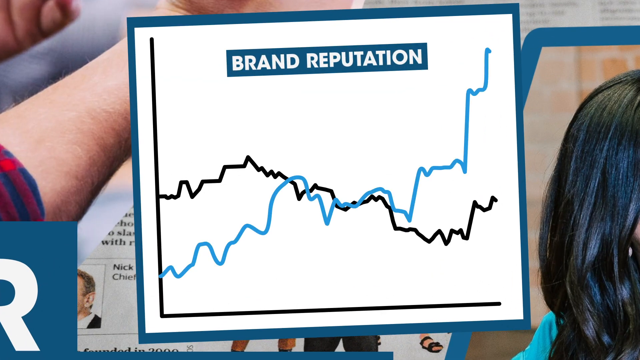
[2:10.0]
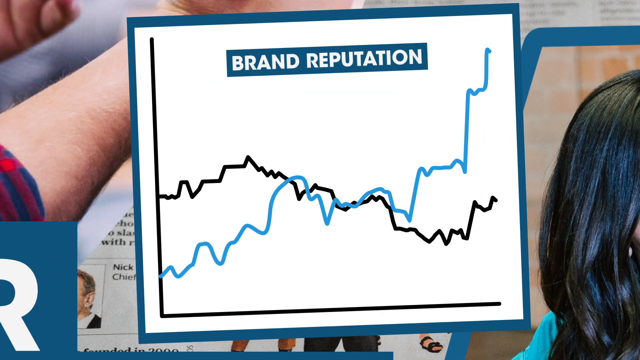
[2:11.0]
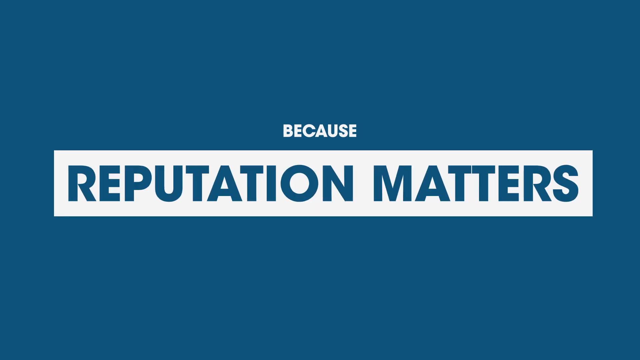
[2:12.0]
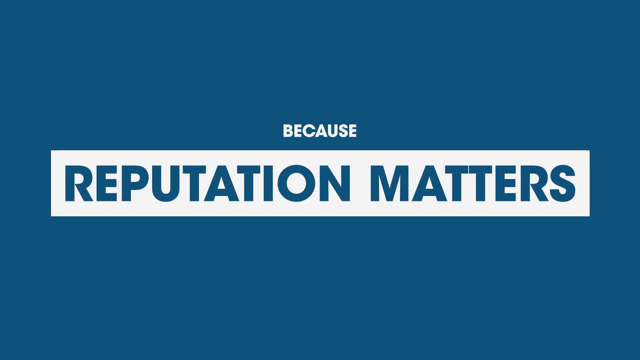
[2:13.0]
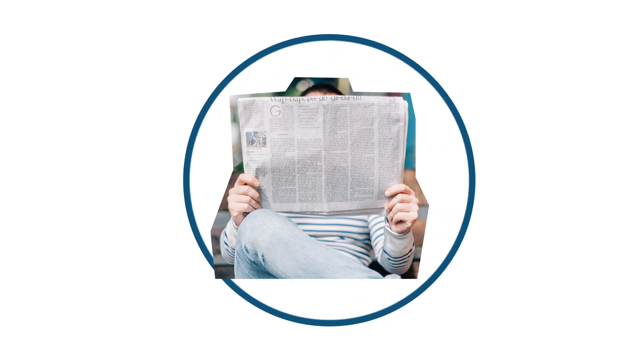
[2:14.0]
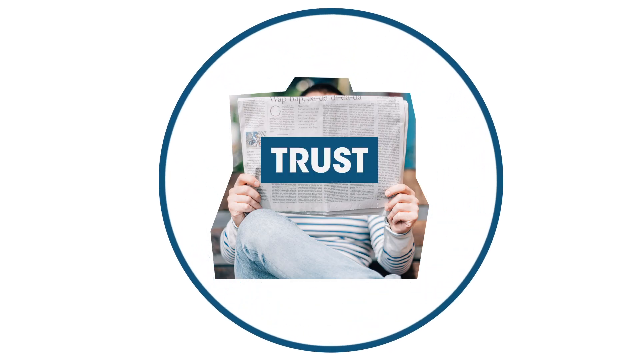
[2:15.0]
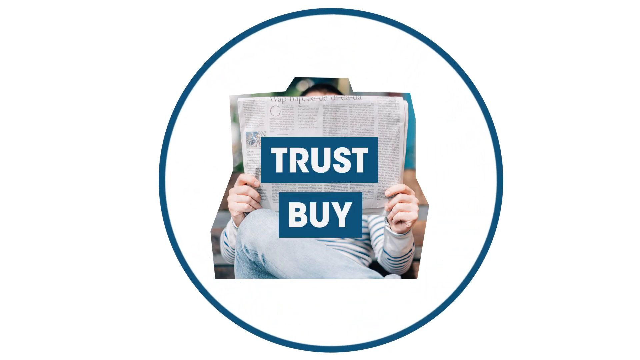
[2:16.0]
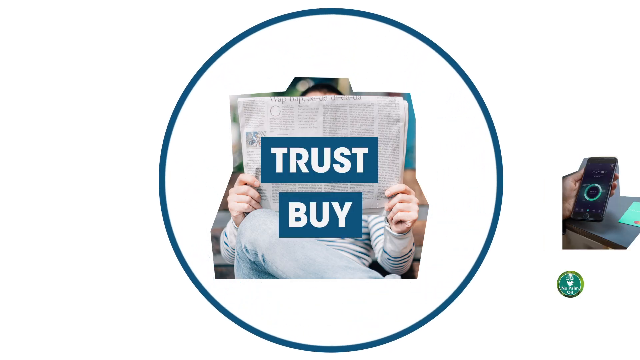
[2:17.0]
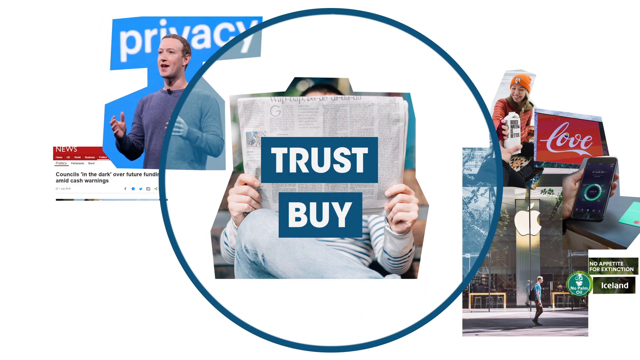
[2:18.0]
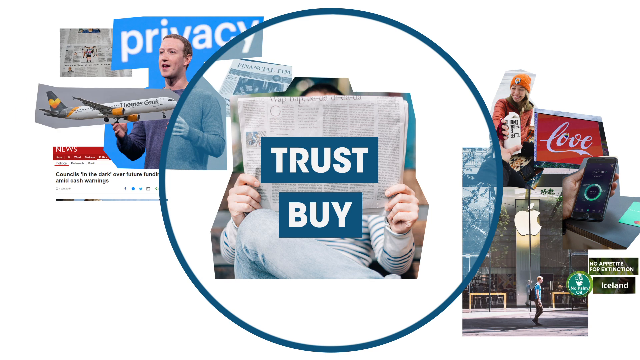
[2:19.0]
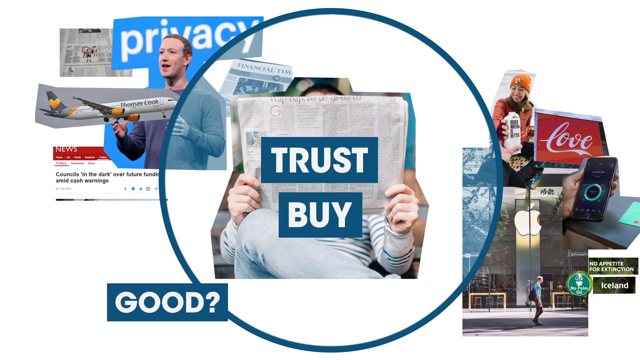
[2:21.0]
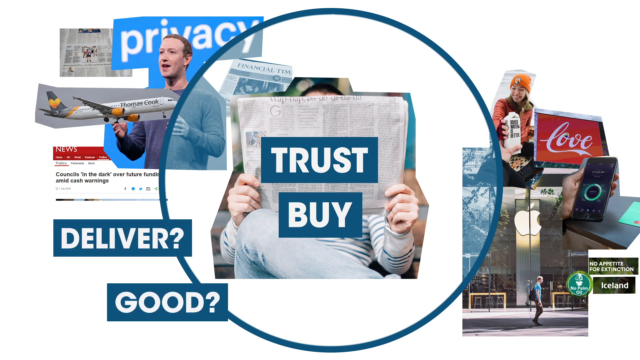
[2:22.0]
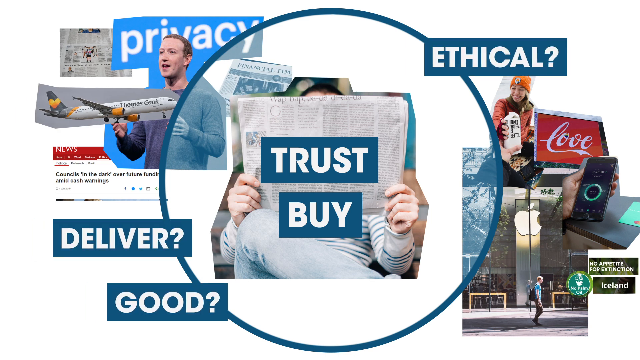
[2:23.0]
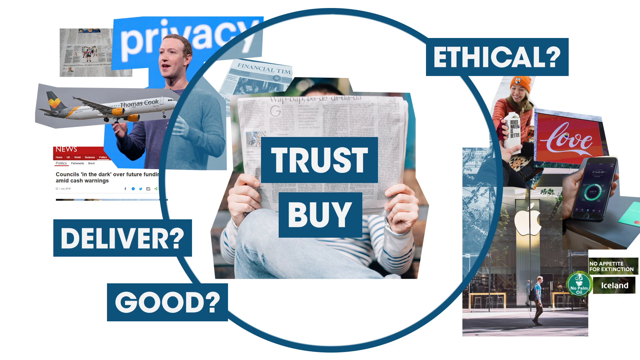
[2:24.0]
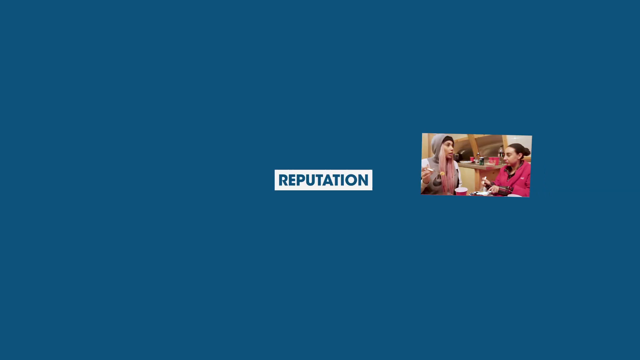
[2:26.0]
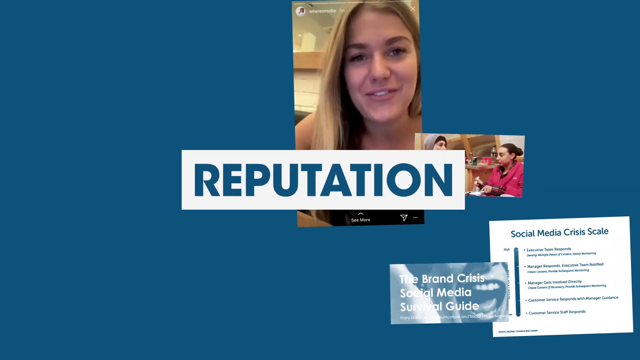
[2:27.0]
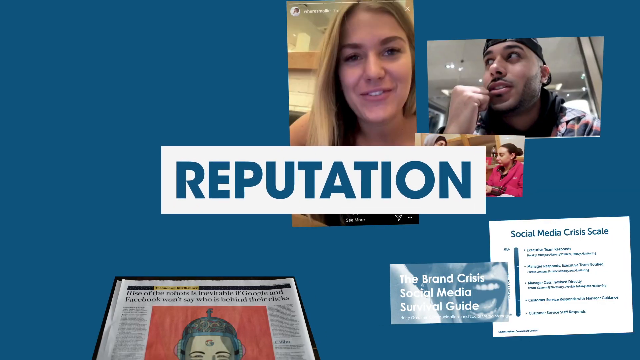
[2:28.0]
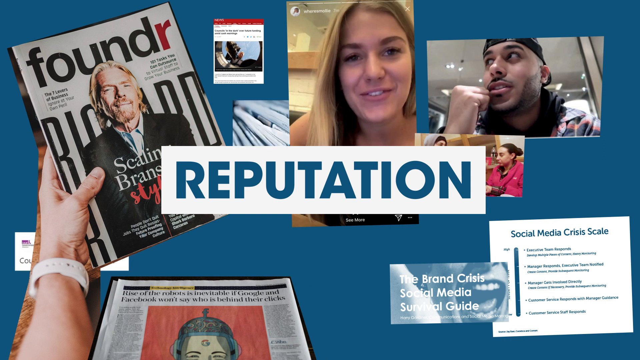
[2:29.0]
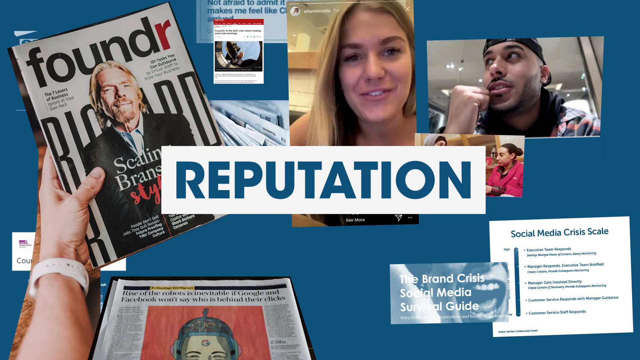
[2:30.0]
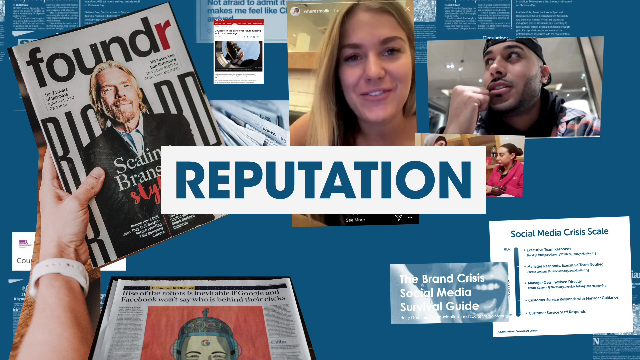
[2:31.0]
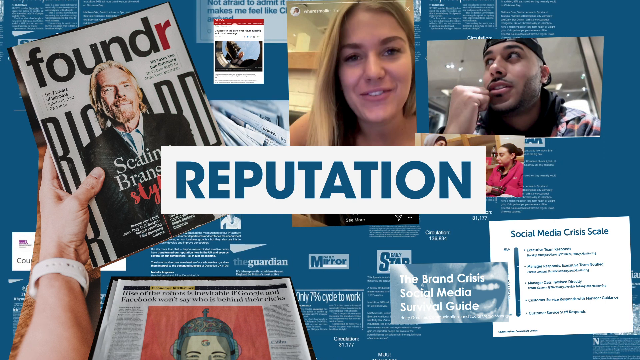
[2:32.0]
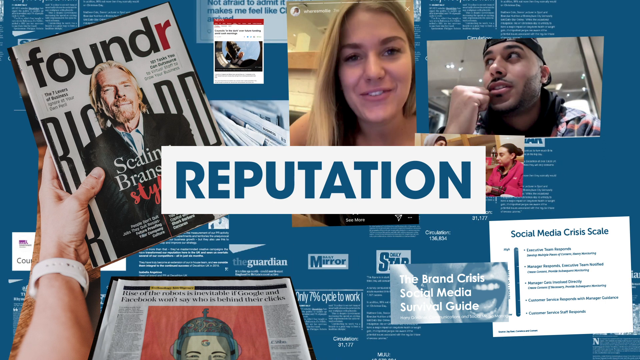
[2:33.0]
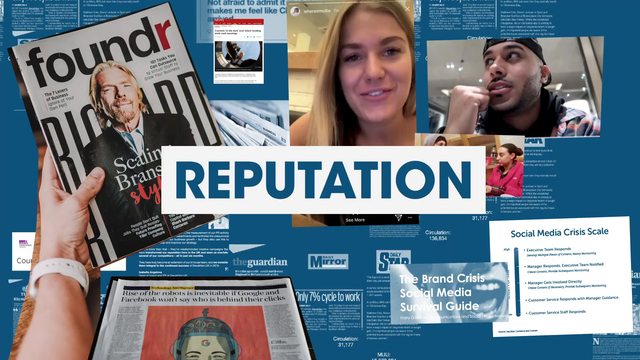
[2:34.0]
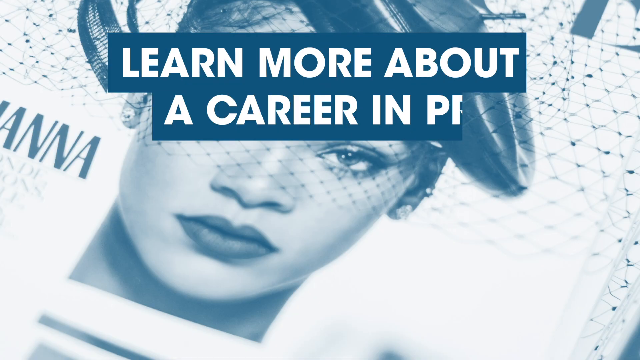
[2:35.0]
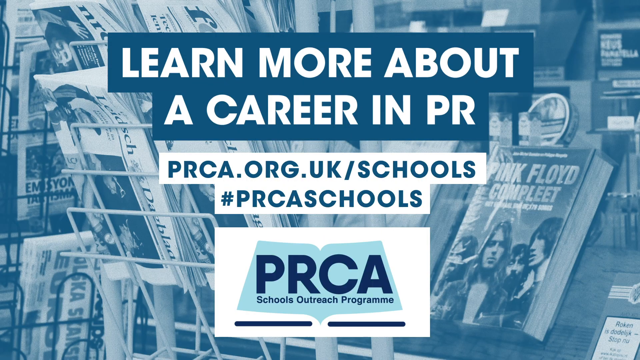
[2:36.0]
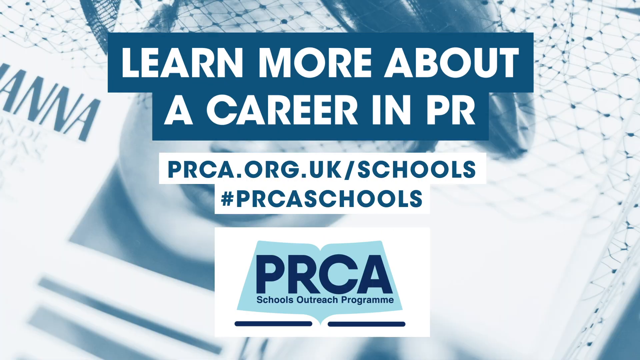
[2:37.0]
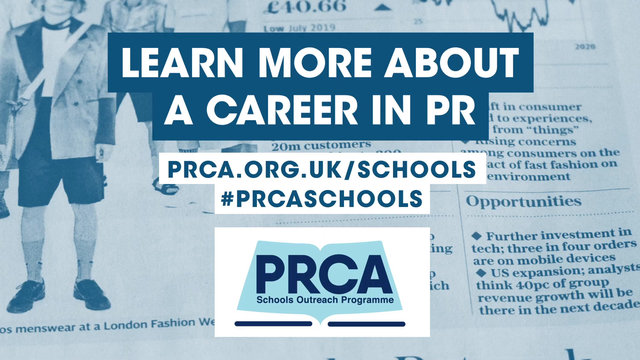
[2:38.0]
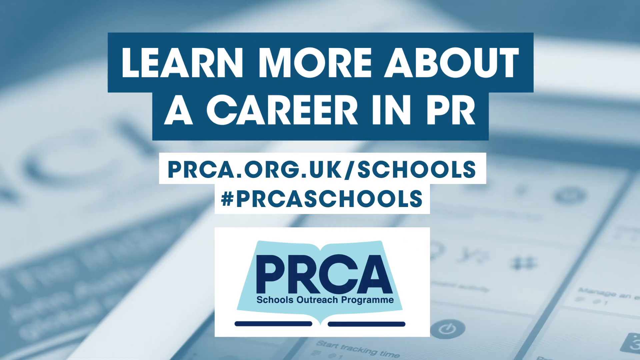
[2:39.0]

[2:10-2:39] A graph about the brand with blue and black lines shows how the brand is performing, along with a message on the screen. A man holds and reads a newspaper. Text says "good?". On the right side, a woman with red hair holds a juice. The word "love" is written in white on a red background. A hand holds a cell phone. On the left side, a man looks like he is explaining something to someone. An airplane flies through, and a man walks through the streets with a backpack.